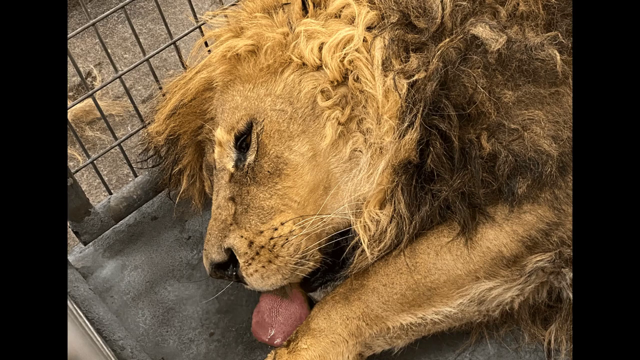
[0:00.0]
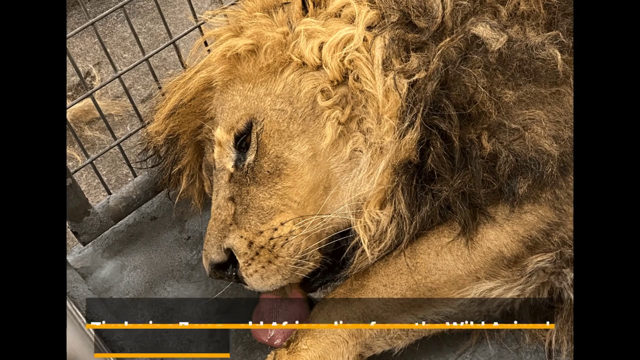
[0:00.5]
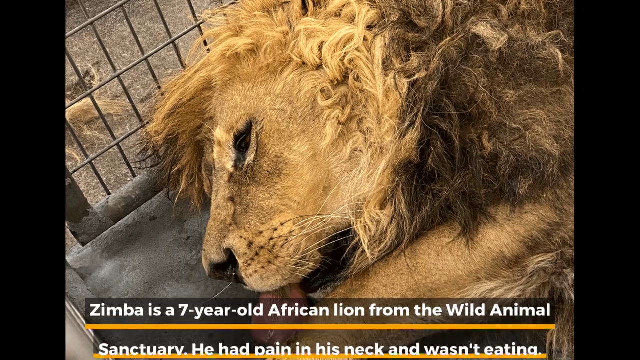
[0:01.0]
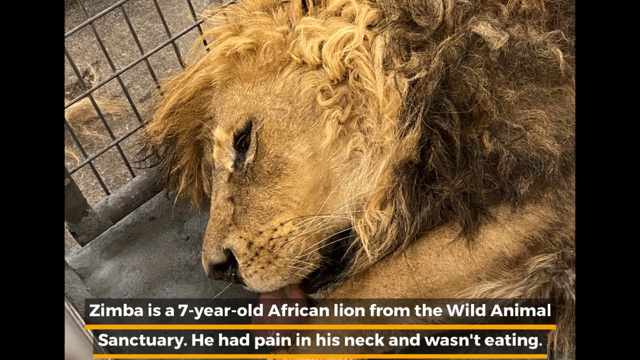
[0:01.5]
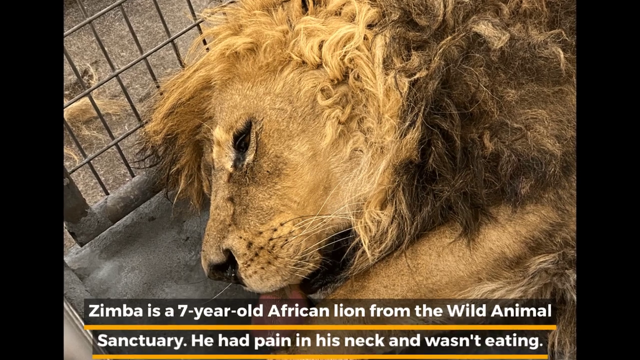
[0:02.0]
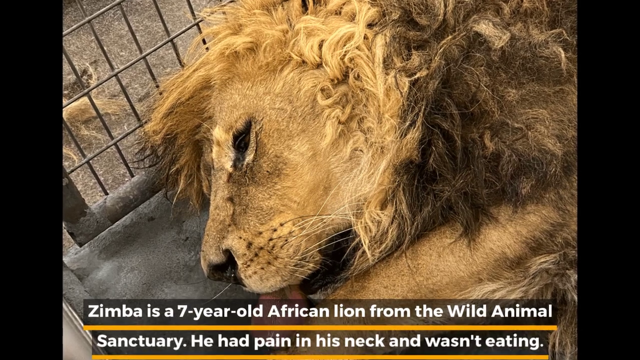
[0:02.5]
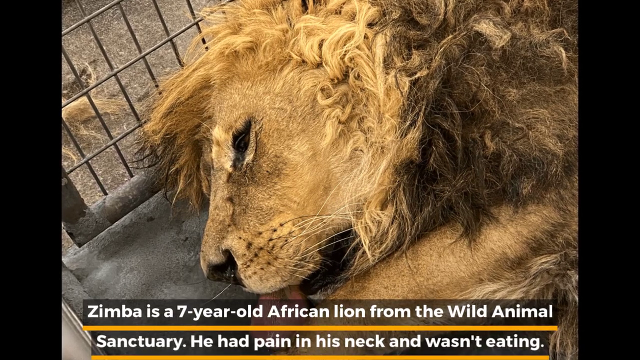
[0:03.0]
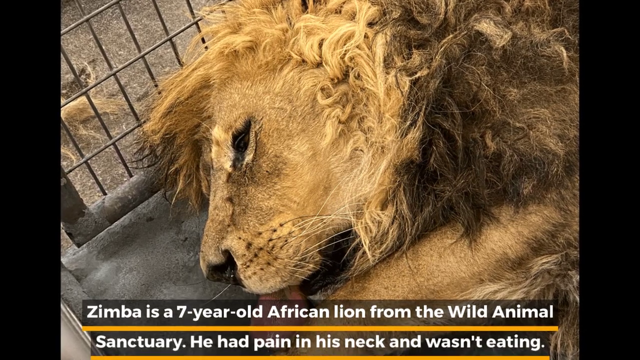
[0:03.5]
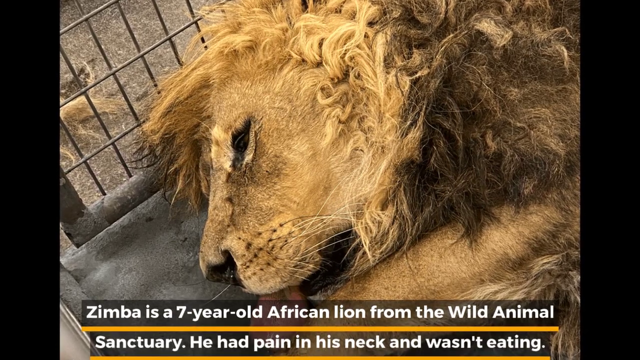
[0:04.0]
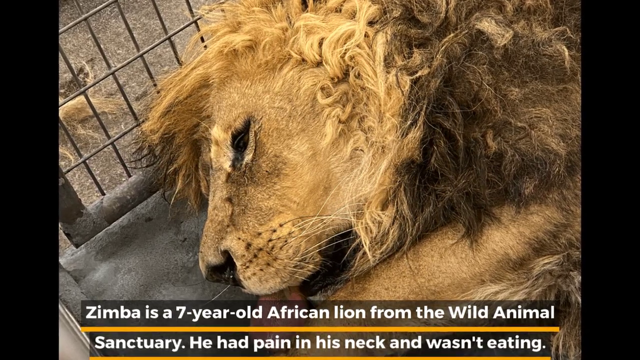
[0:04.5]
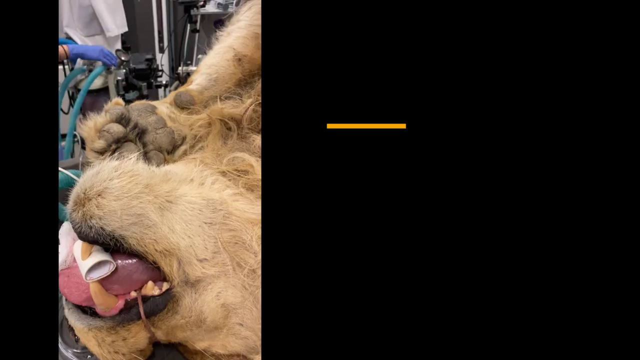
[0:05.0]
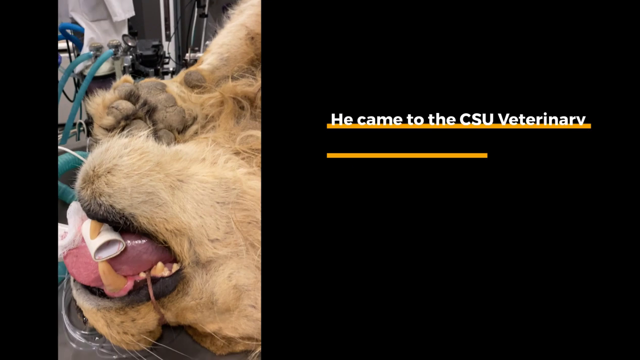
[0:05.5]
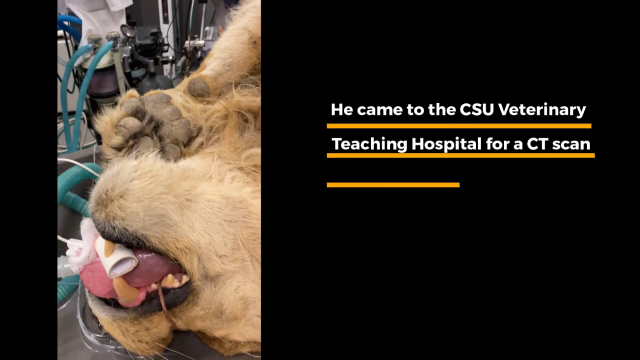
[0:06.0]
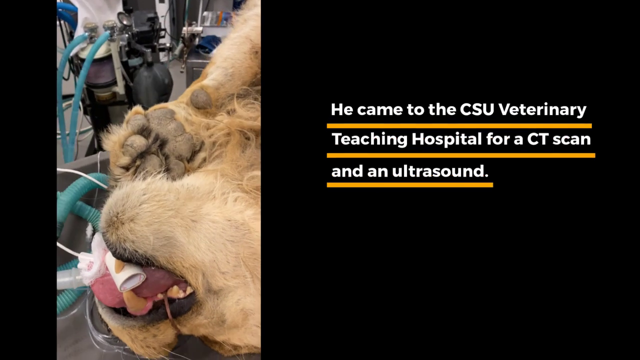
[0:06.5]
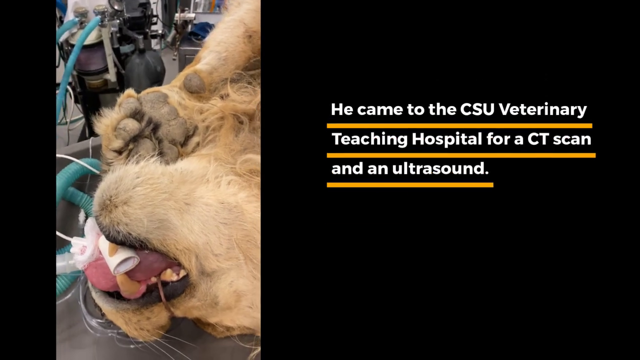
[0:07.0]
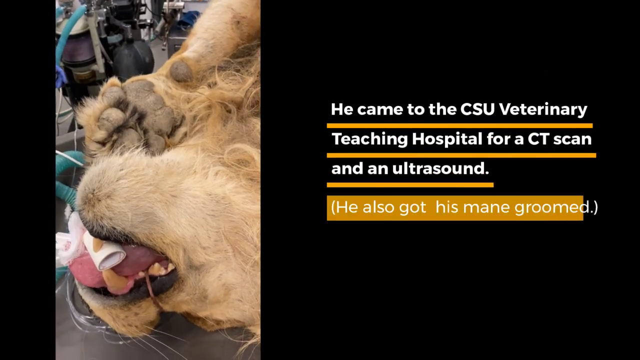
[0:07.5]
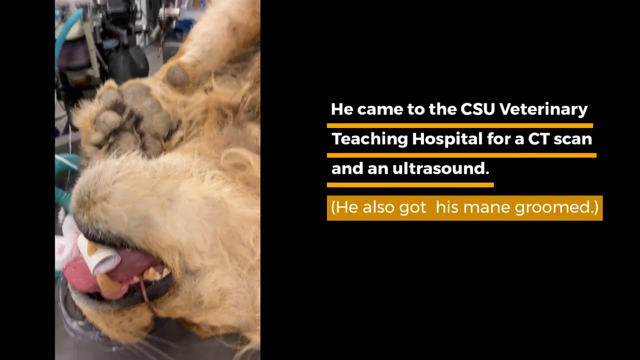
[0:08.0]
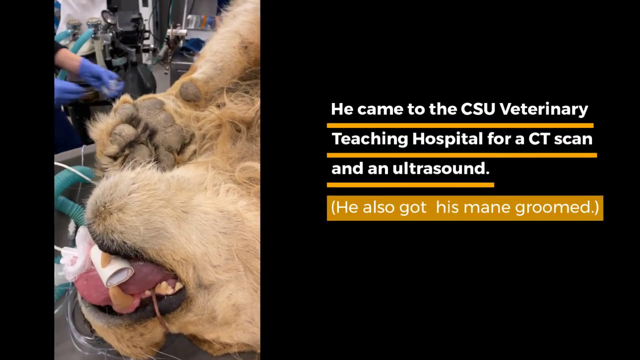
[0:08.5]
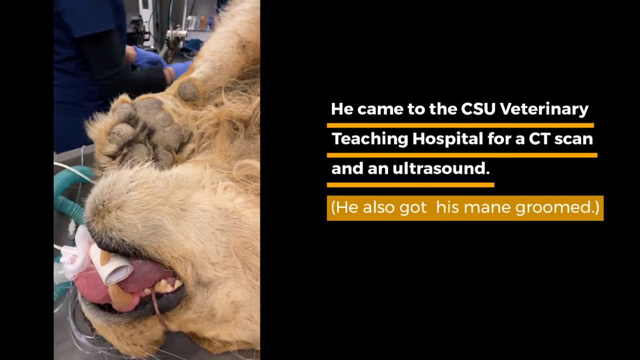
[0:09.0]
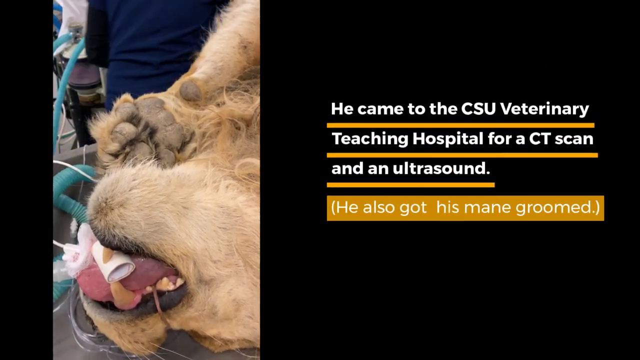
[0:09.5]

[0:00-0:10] The video opens on a close-up picture of a lion that looks like it is laying in a cage, its head on the bottom of the cage and its tongue sticking out; it looks very sick and lethargic. White text at the bottom reads "Zimba is a seven-year-old African lion from the wild animal sanctuary. He had pain in his neck and wasn't eating." Another picture of the lion then comes up on the left side of the screen: apparently a close-up of its mouth, with the lion seemingly laying on its back under anesthesia, some kind of white tube in its mouth underneath its tongue, and its paw up near its face. On the right side, text reads "he came to the CSU Veterinary Teaching Hospital for a CT scan and an ultrasound," and in parentheses "he also got his mane groomed."